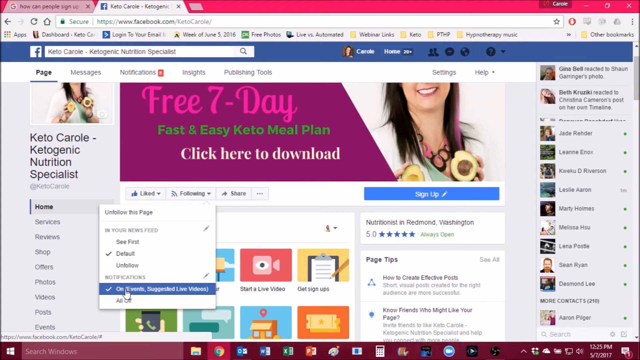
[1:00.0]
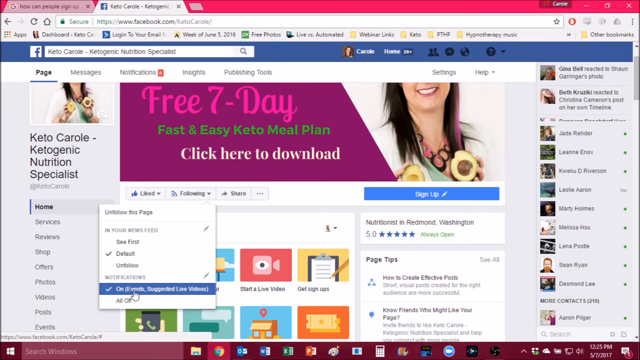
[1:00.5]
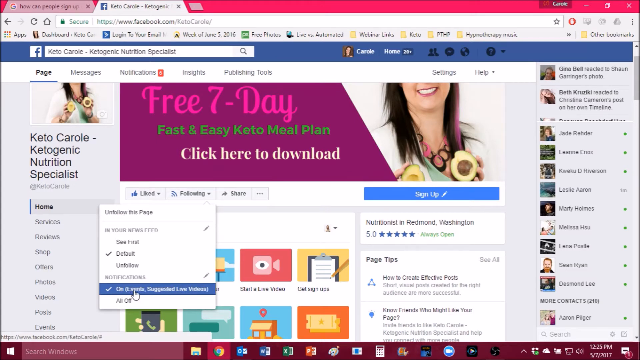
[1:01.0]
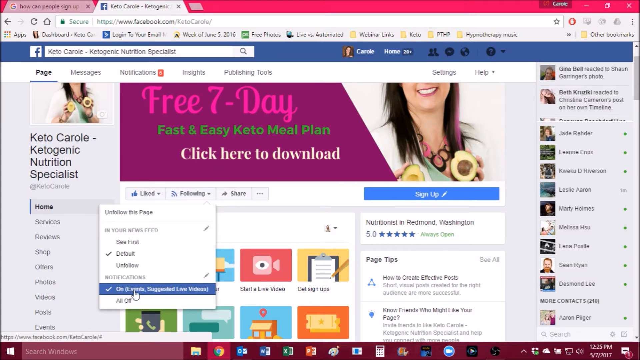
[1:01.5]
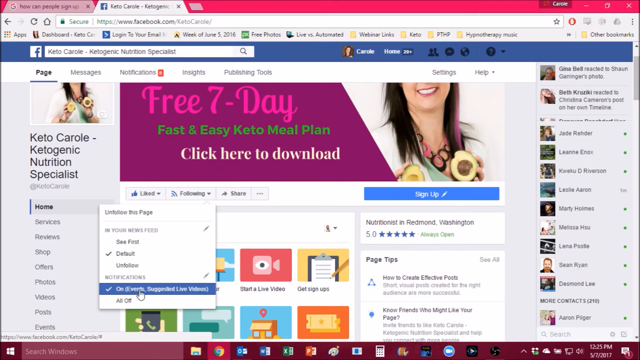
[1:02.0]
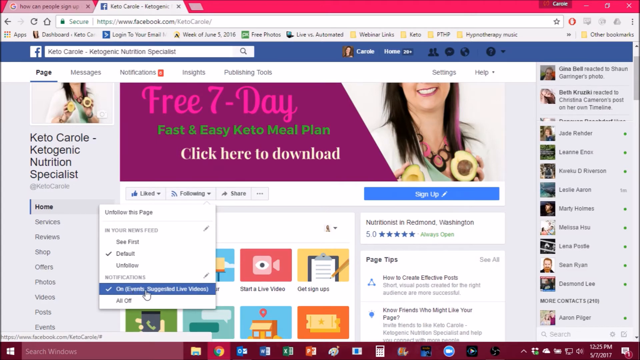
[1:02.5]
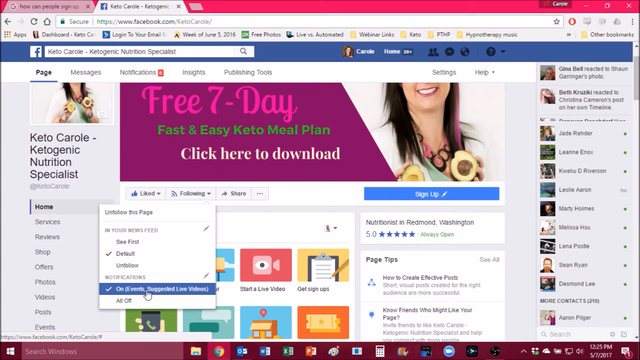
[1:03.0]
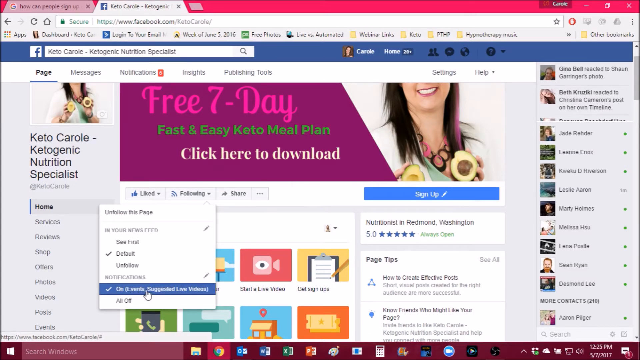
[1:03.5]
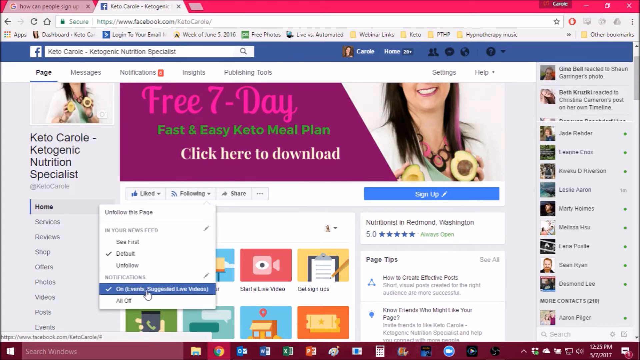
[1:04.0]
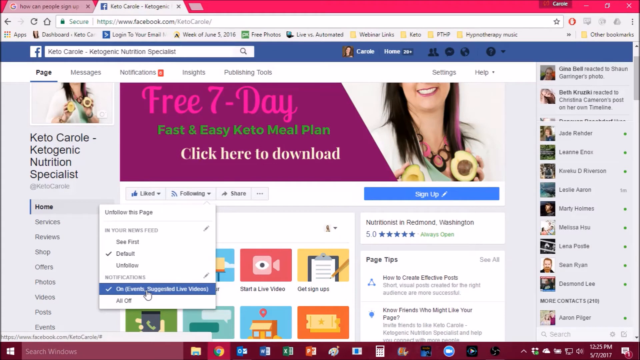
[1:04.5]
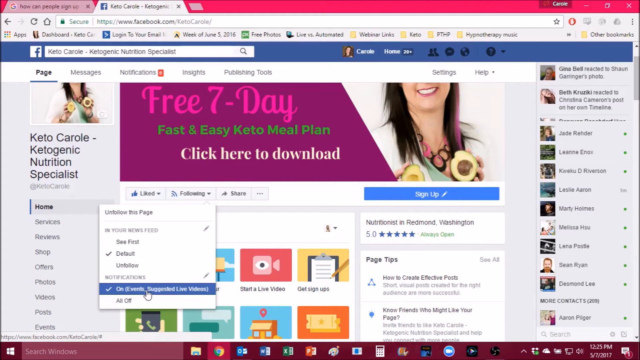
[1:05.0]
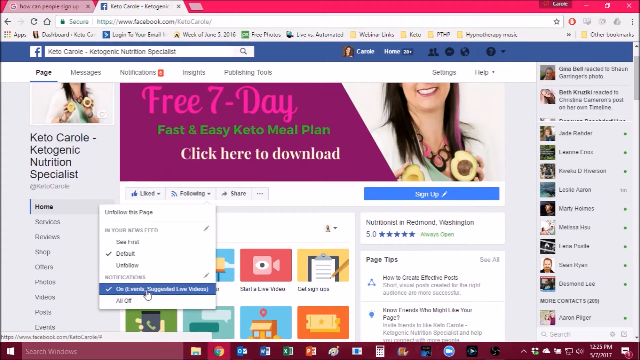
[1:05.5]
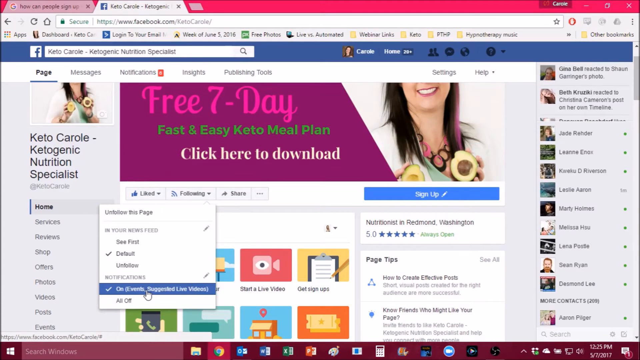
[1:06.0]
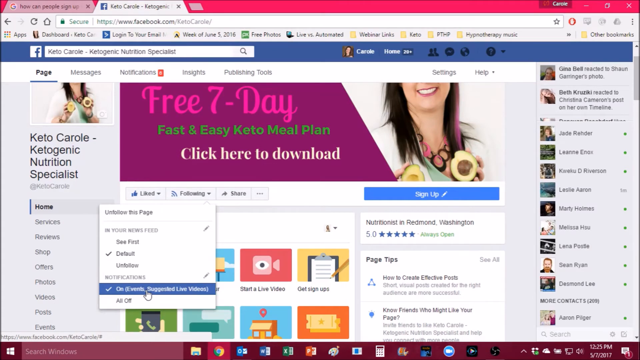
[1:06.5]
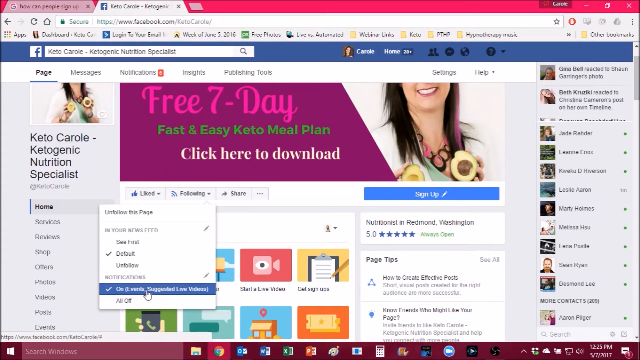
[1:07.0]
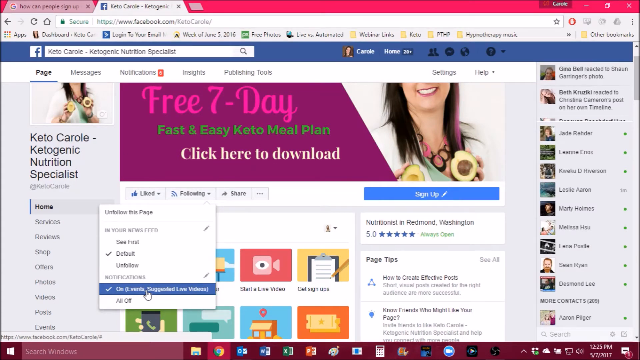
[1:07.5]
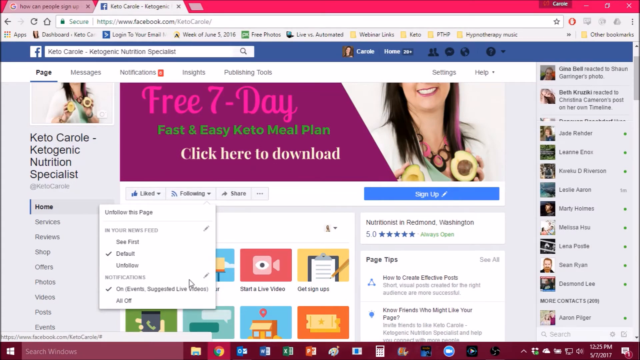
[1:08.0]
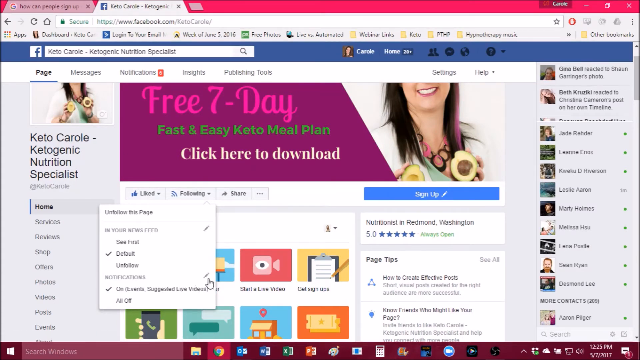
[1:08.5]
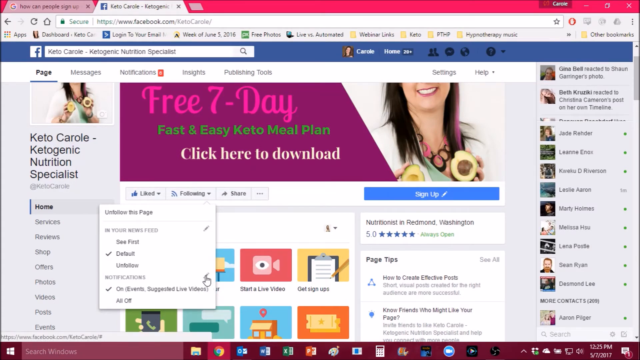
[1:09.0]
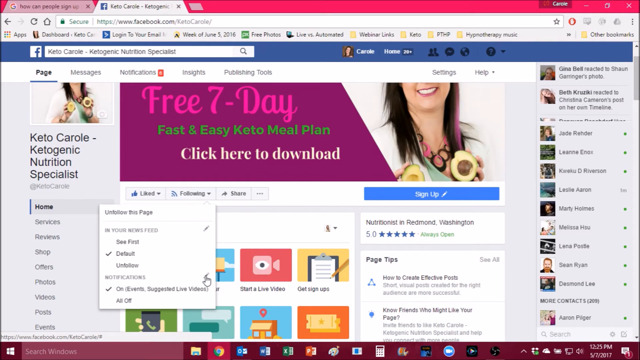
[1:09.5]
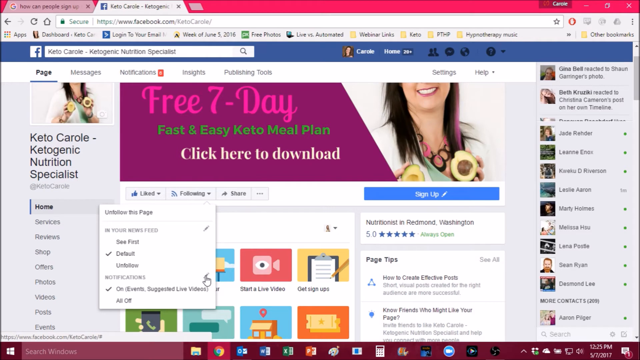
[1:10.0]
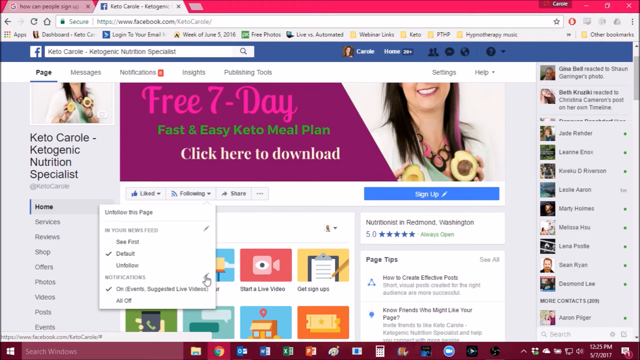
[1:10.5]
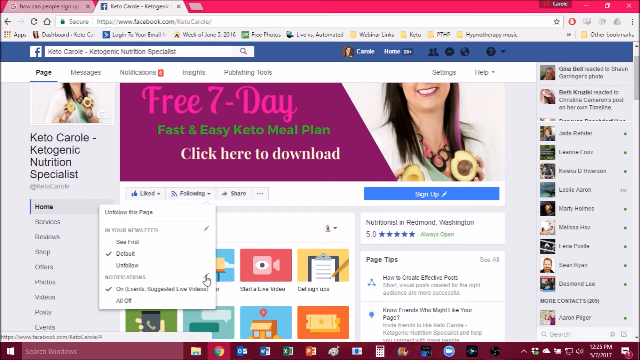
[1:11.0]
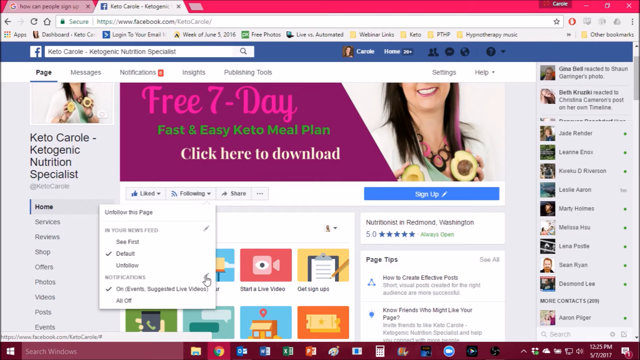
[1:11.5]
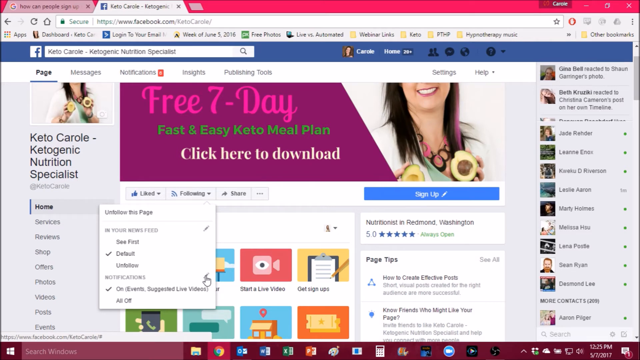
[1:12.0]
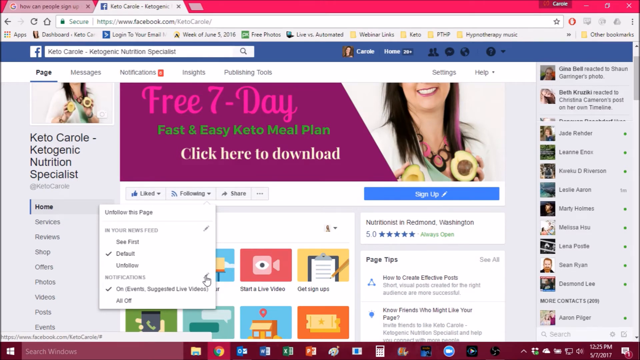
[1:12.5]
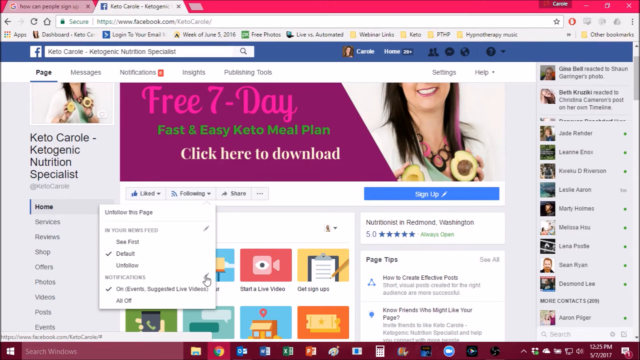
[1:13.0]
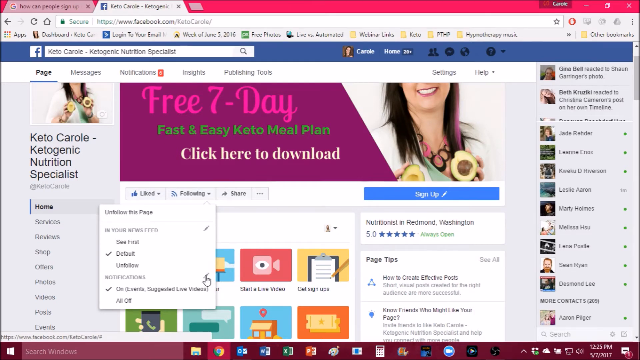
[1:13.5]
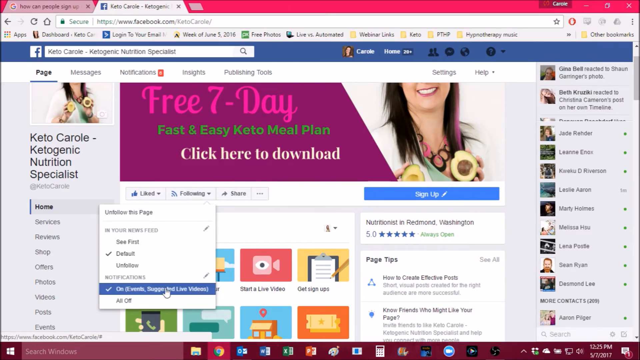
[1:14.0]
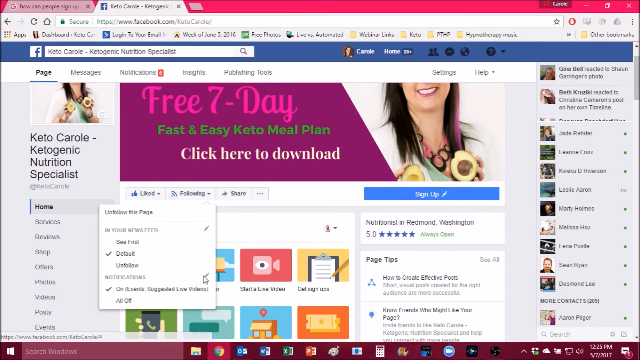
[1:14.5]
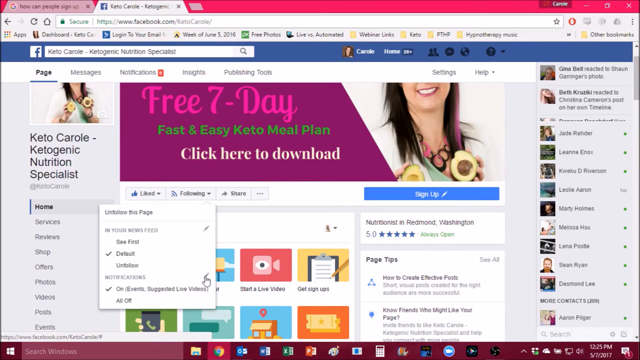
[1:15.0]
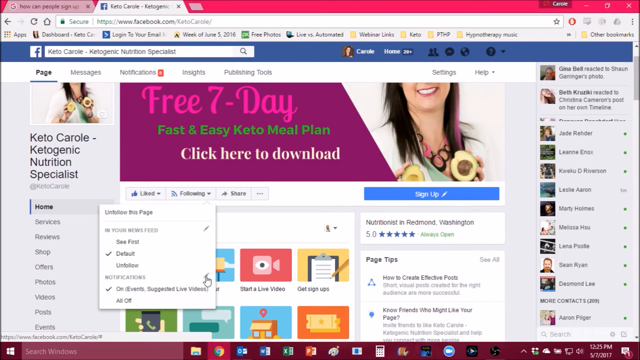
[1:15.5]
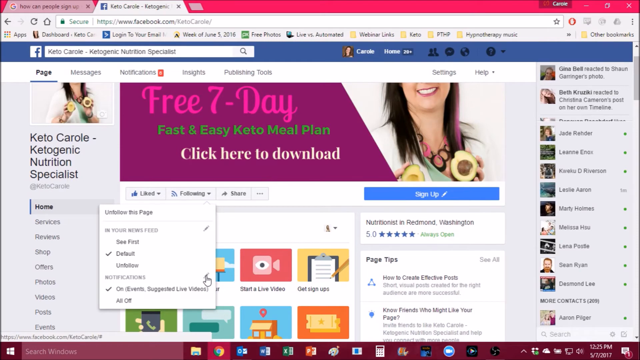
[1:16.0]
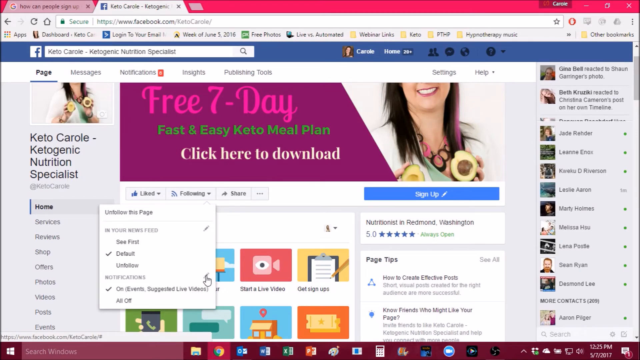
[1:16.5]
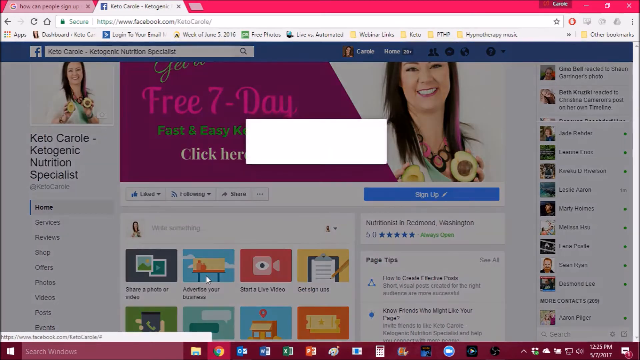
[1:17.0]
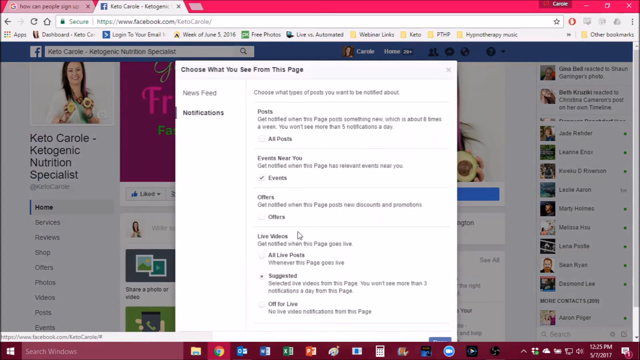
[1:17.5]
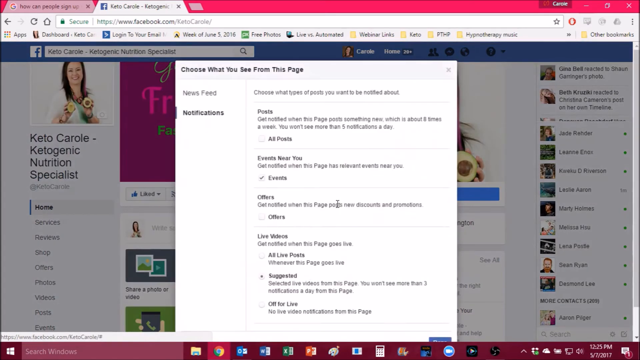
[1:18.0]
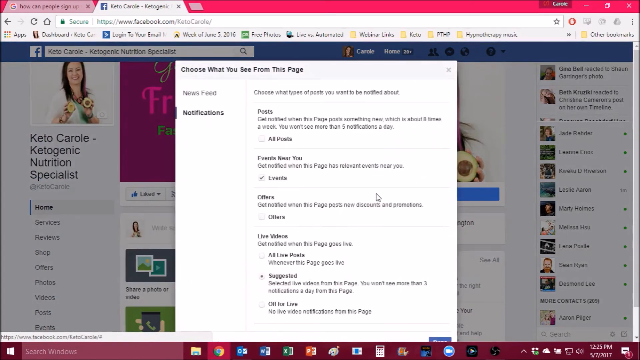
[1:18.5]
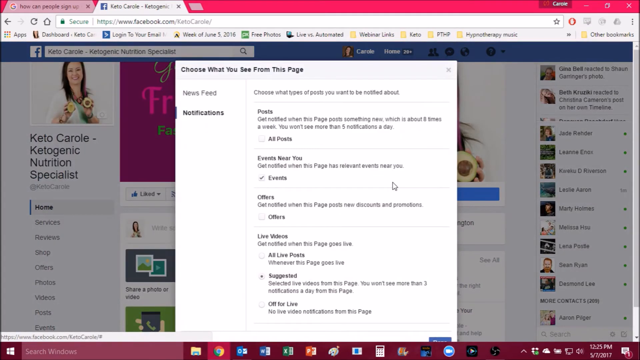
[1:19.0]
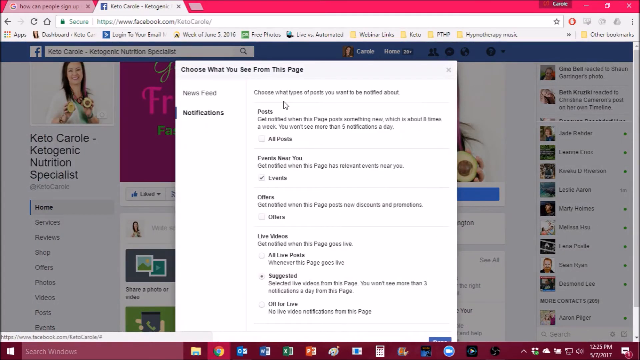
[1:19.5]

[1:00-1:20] On the same Facebook page, the cursor is highlighting the on section of notifications in the following drop-down menu. It moves slowly from left to right, as if someone is reading what it says on the screen. The mouse then moves abruptly a bit to the right, stops highlighting that section, and moves to the pencil to the right of notifications in the same drop-down menu. It repeats this several times until the pencil is finally clicked, seemingly to show the audience how to click on this area. This opens the notifications options box, which pops up over the Facebook page. The mouse moves from the bottom right of the box to the upper left.